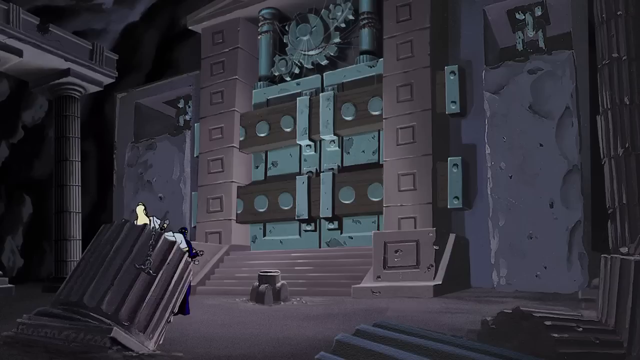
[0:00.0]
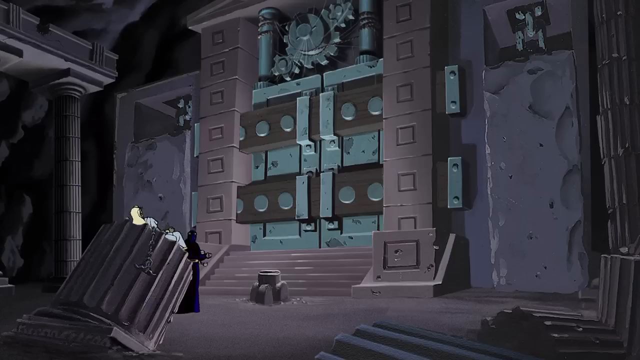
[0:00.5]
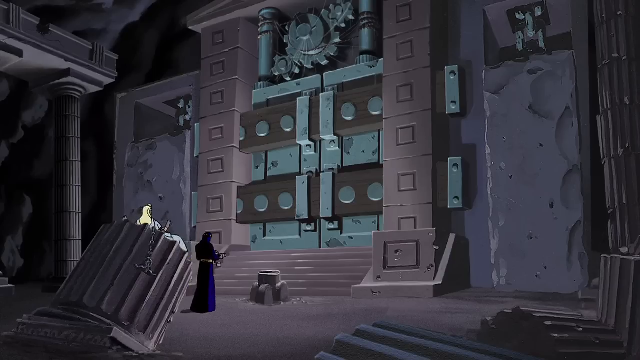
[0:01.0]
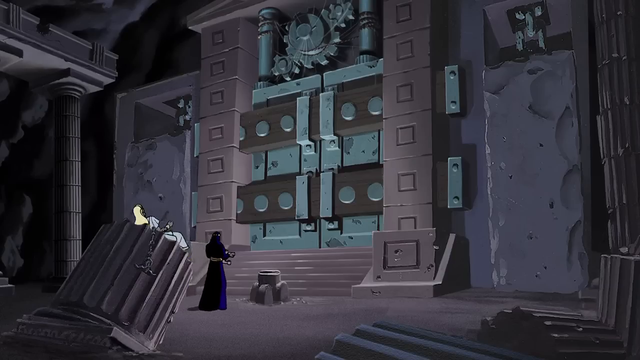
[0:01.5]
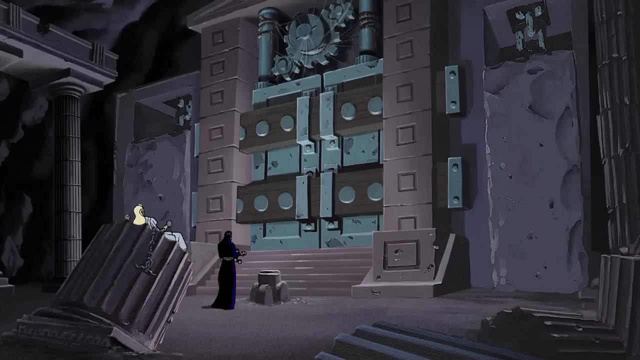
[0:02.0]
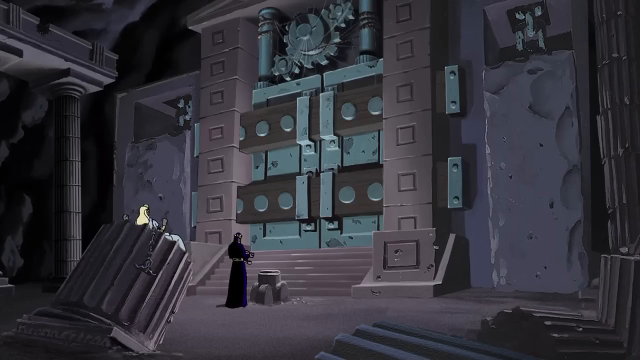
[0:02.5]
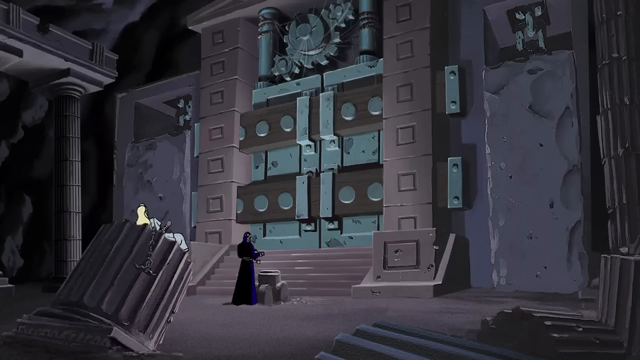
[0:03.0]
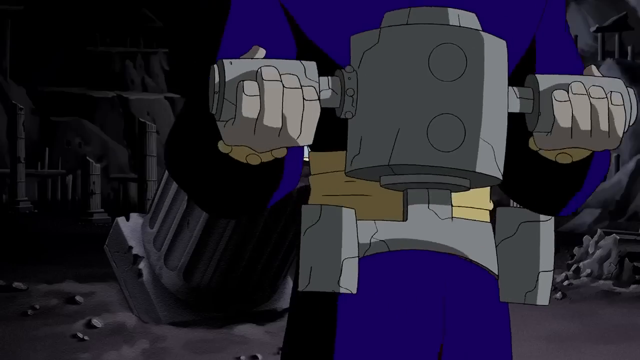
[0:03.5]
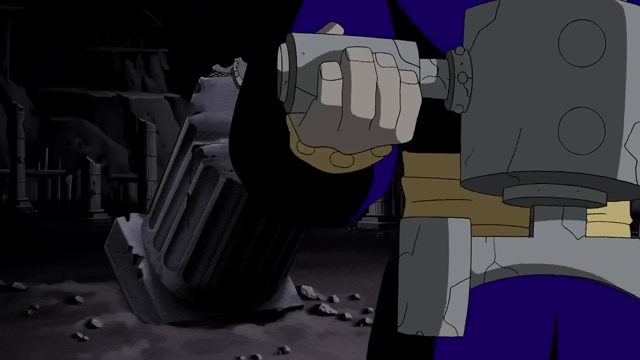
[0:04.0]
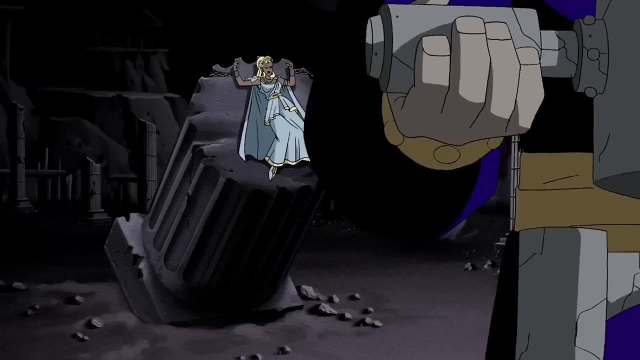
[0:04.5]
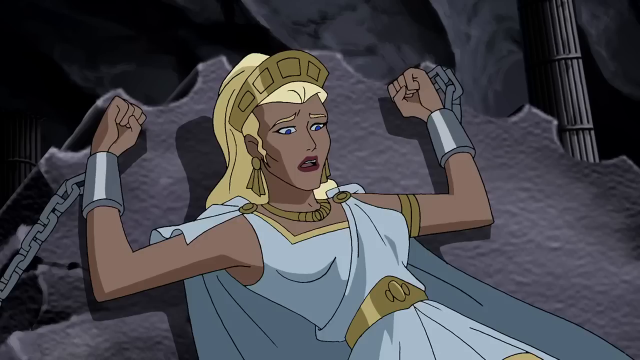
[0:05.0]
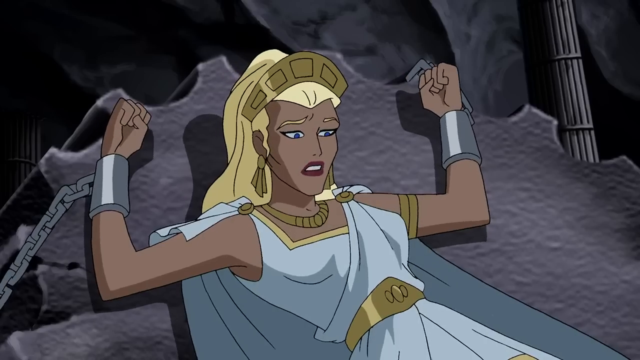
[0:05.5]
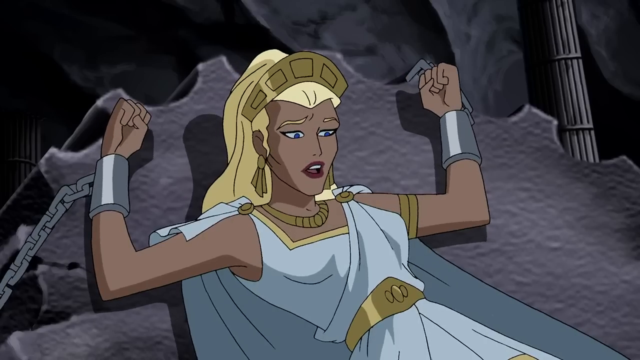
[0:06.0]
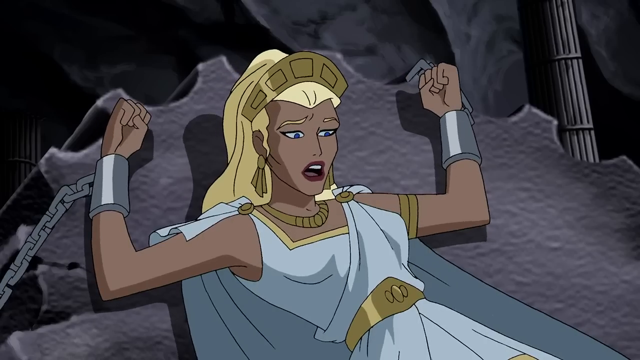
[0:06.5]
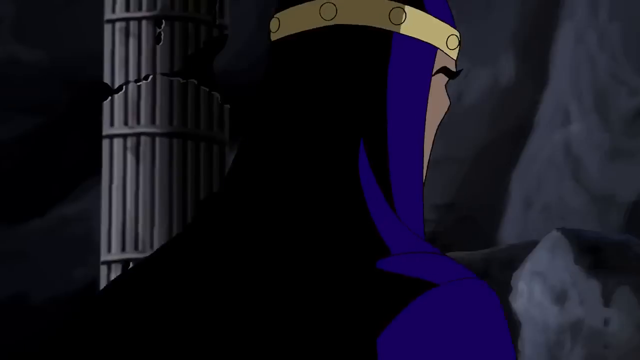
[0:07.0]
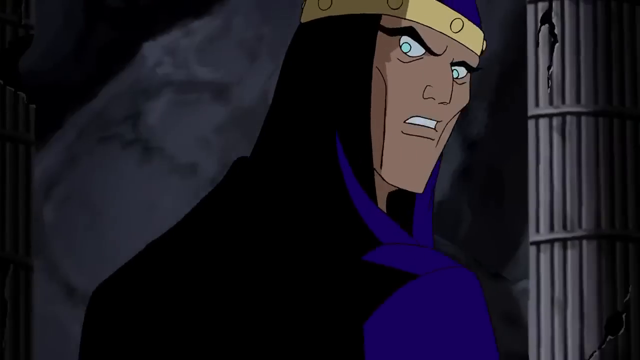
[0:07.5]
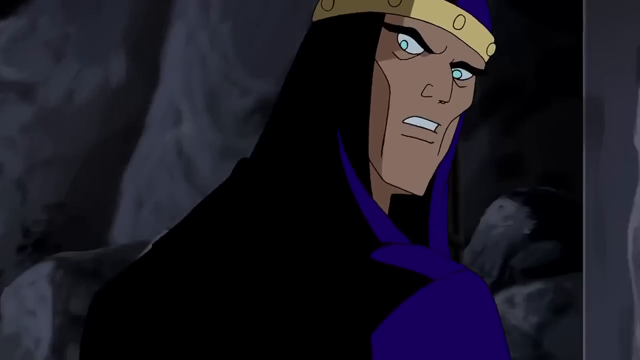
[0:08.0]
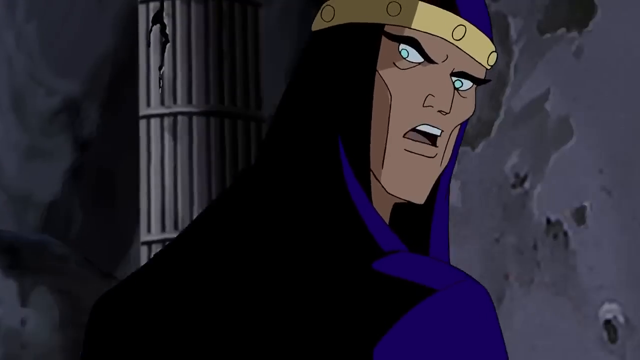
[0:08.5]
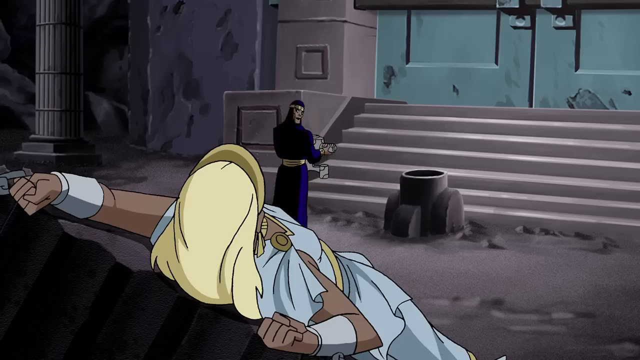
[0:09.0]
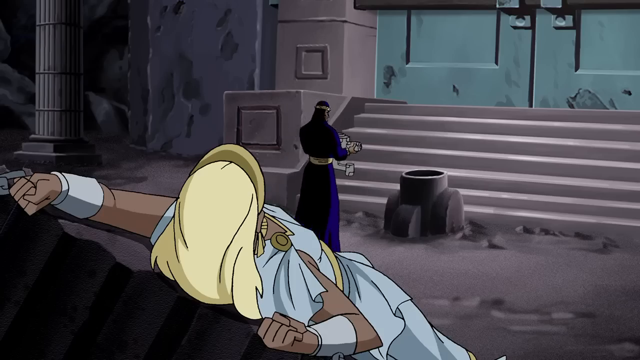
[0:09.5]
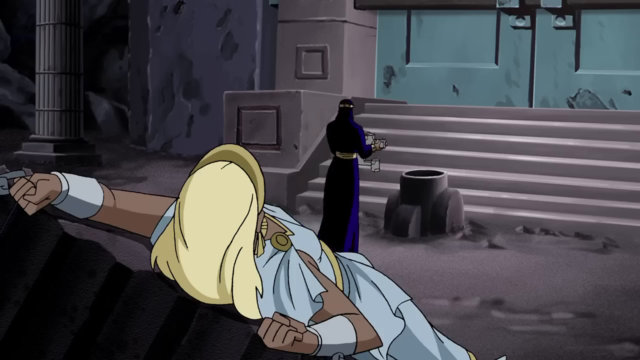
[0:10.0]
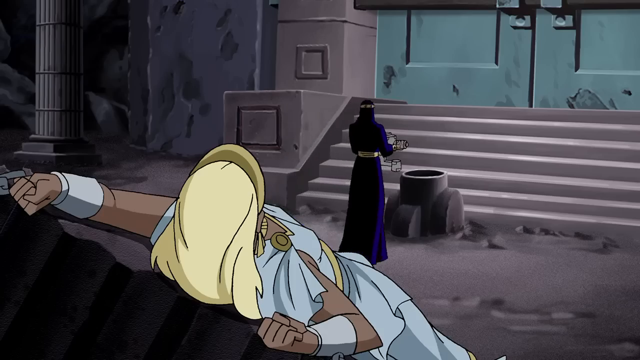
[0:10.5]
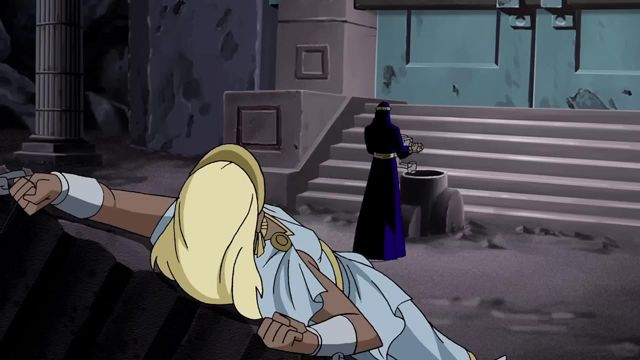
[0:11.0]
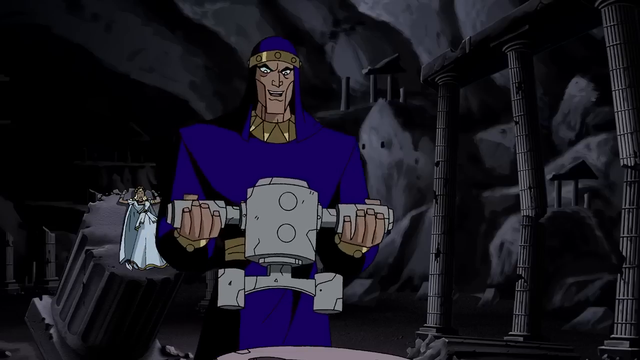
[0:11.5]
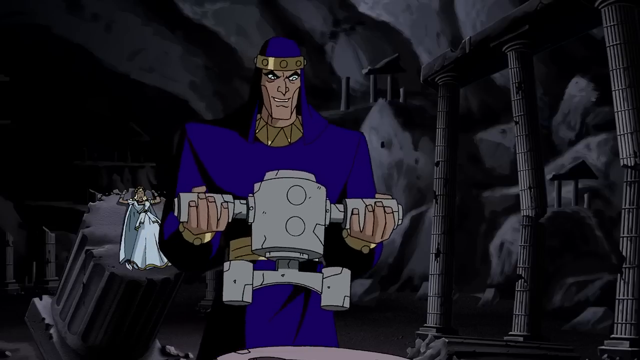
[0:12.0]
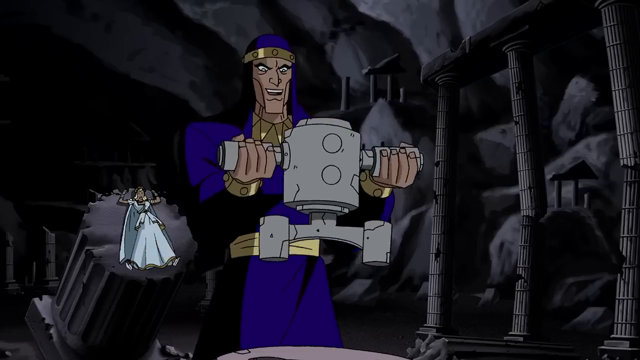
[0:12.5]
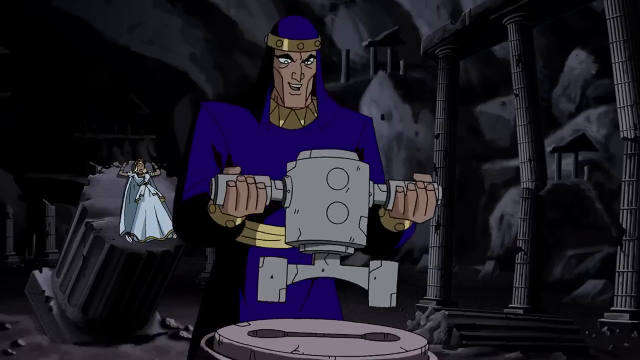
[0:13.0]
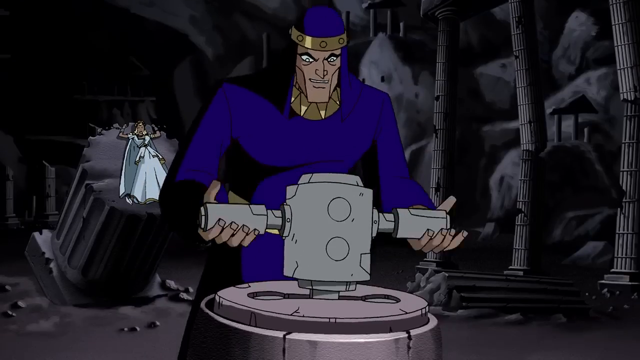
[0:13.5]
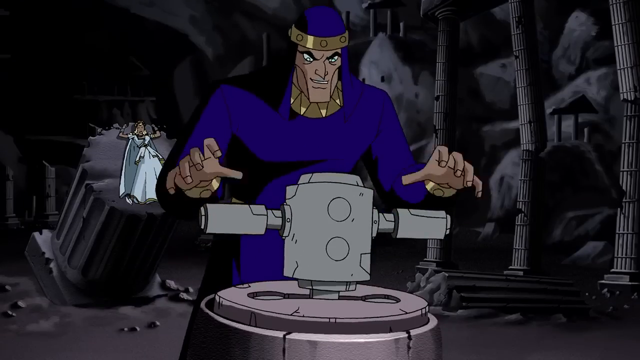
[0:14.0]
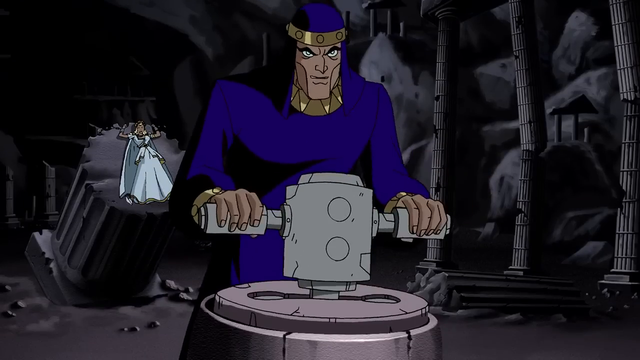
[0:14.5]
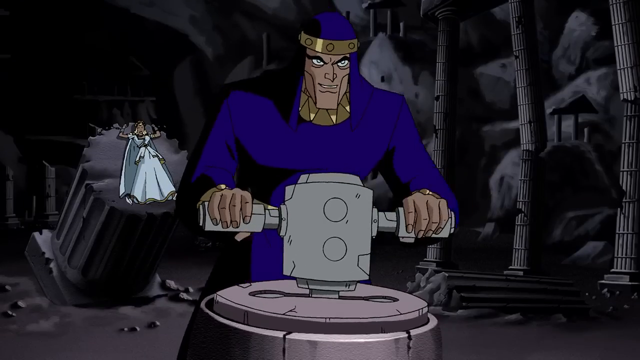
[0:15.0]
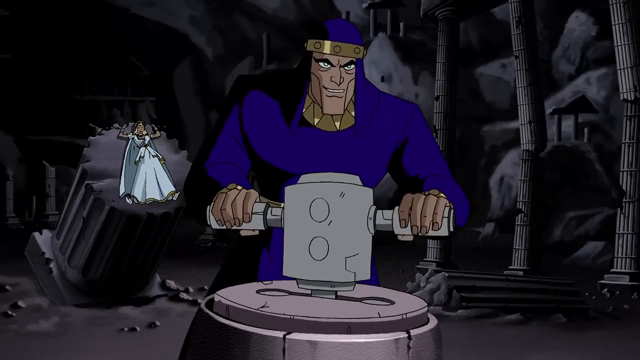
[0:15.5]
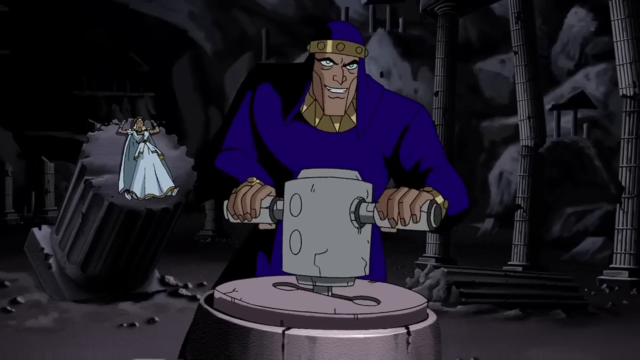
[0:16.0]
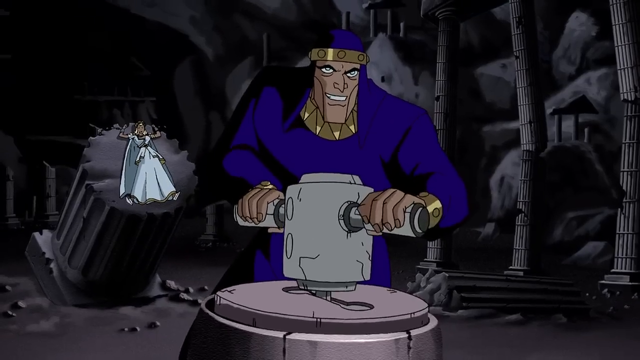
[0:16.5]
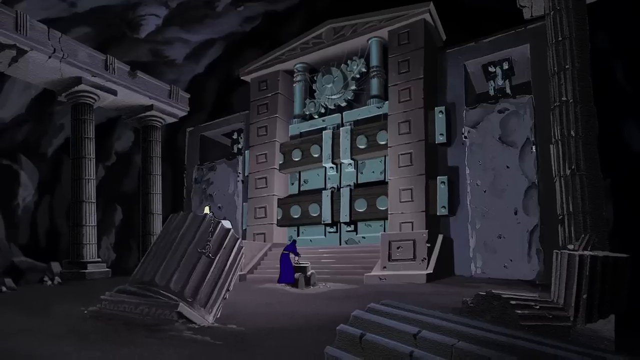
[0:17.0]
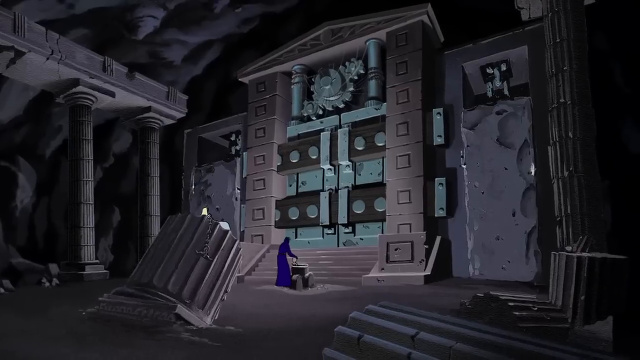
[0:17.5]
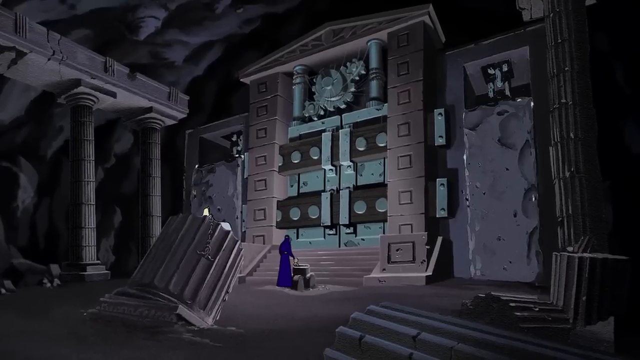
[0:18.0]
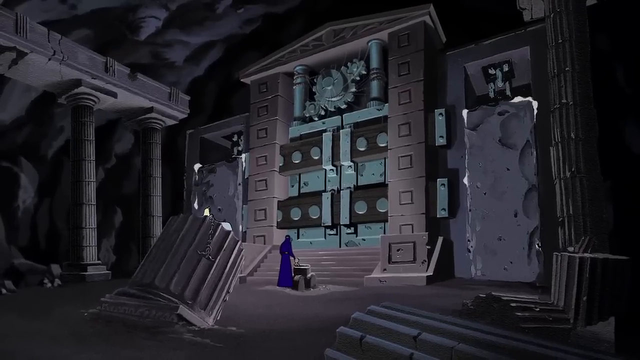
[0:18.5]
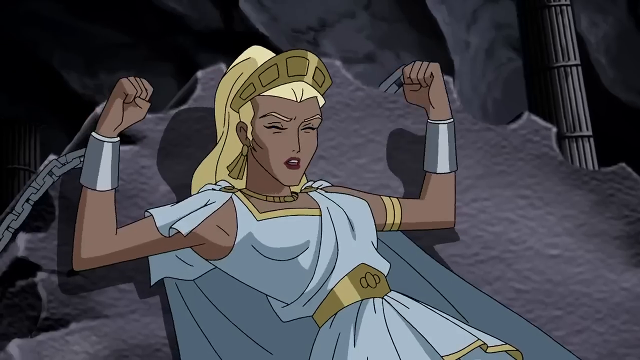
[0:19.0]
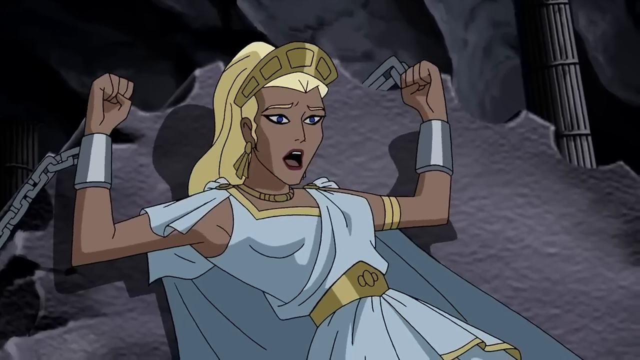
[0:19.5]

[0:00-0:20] The video opens on what looks like the inside of a dungeon. The main character walks up toward the dungeon, and as they approach, the scene changes. The character now appears to be holding a stone object in their hands, with a handle sticking out of each side; they hold the handles in the palms of their hands, fingertips securing the handles in front and thumbs securing them toward the back, at about torso height. The character wears a blue outfit, and in the background on the right side of the screen there appear to be pebbles and stones. As the character finally moves away, a woman is revealed handcuffed to a large object, with handcuffs on each of her wrists. She has blonde hair, blonde eyebrows and blue eyes, and wears a gold crown, a white outfit with gold detailing, a gold belt, a gold necklace and gold drop earrings. At first she looks like she is handcuffed to a round metal object that spins around. She talks to the man as if she is angry with him, and her legs appear to be tied up as well. As the view pans out, it becomes clear that it is not a metal object; she appears to be handcuffed to a column that is tilted sideways.